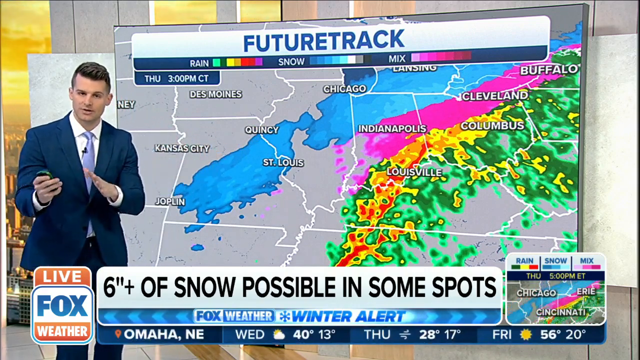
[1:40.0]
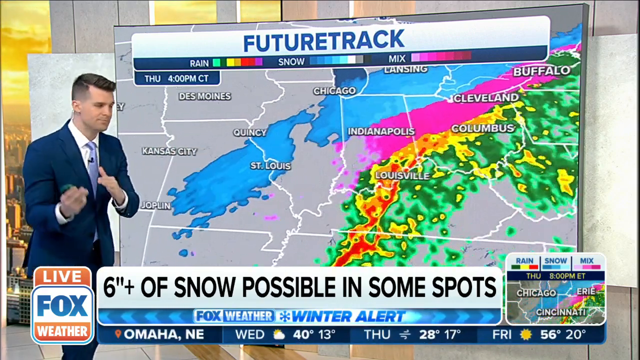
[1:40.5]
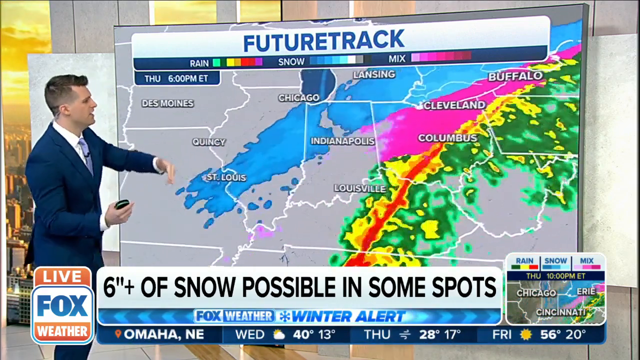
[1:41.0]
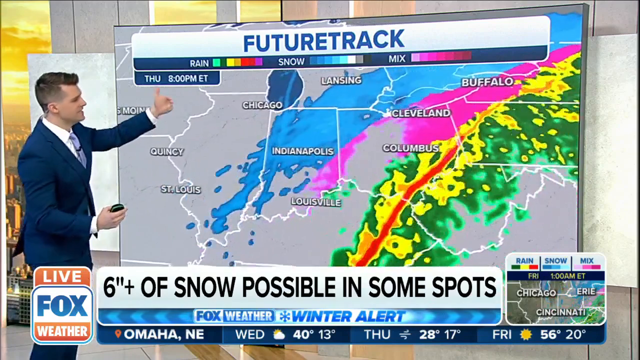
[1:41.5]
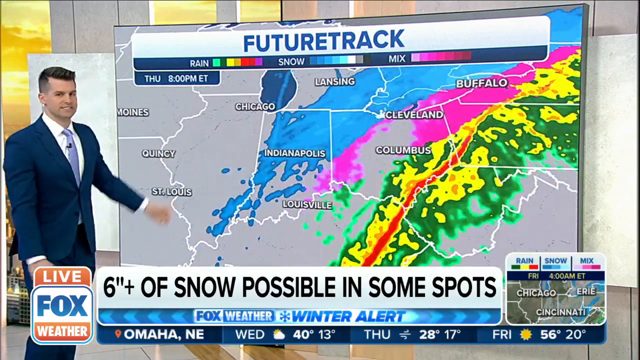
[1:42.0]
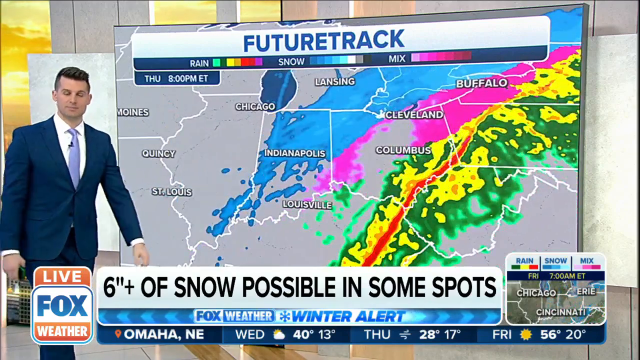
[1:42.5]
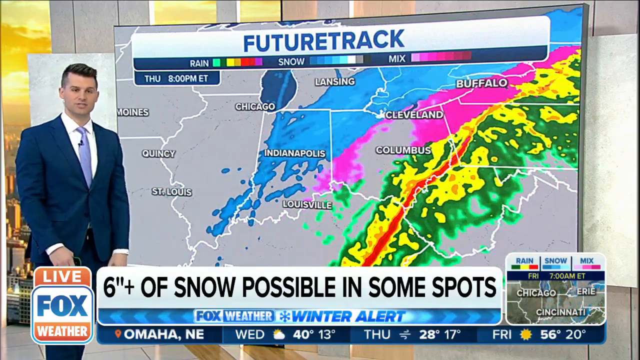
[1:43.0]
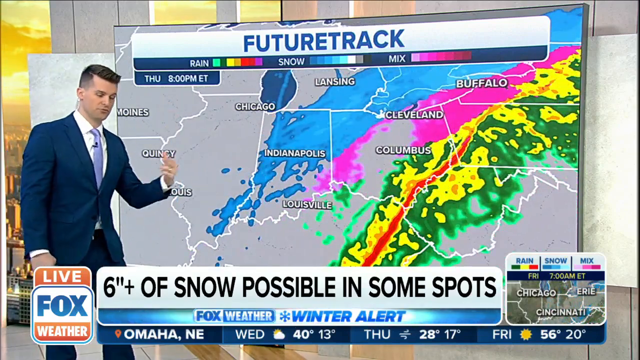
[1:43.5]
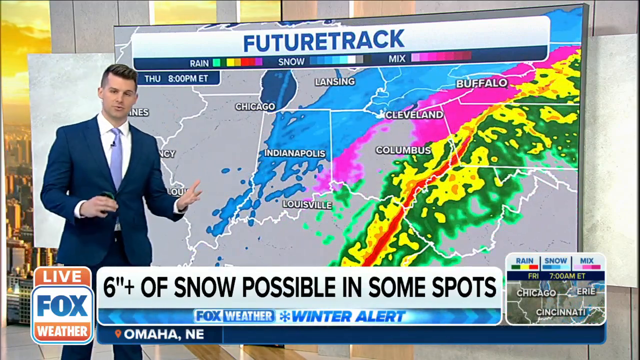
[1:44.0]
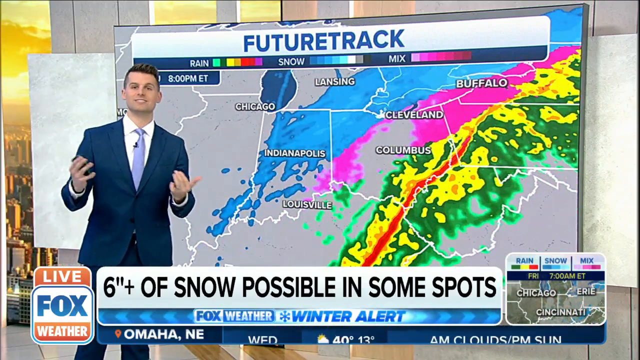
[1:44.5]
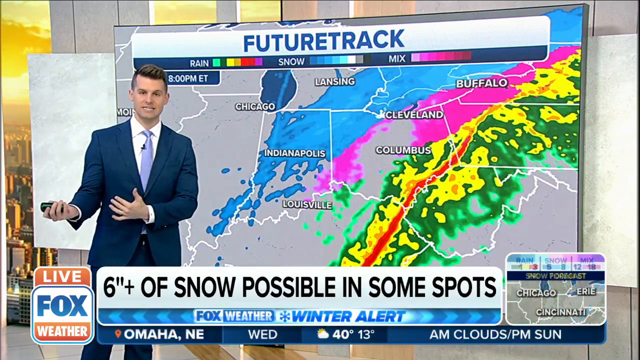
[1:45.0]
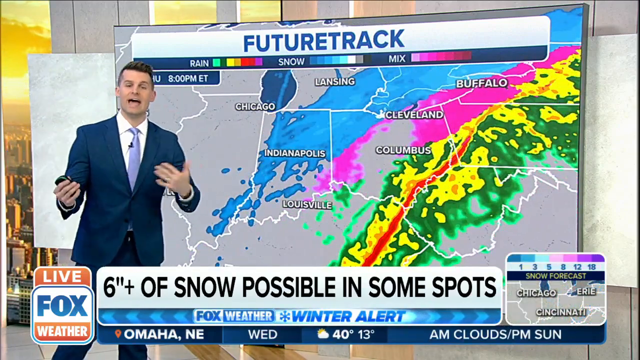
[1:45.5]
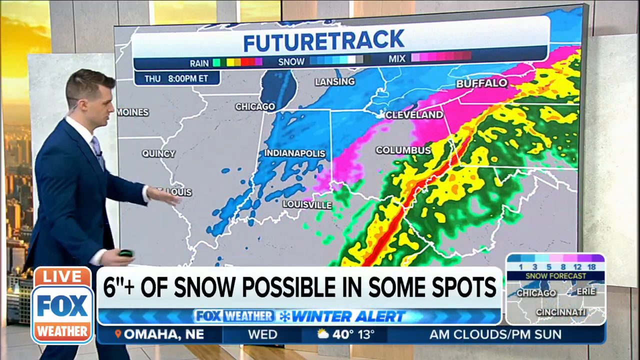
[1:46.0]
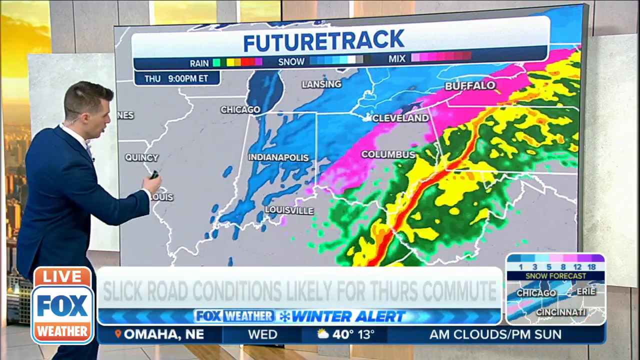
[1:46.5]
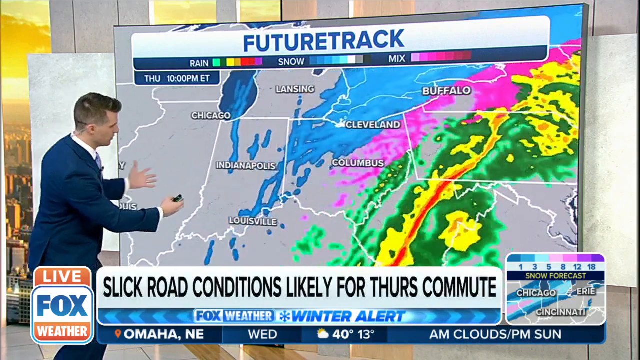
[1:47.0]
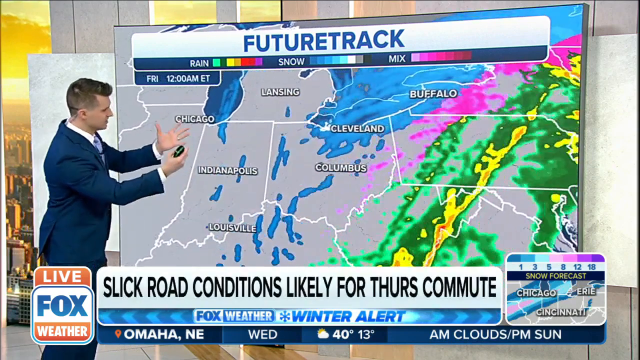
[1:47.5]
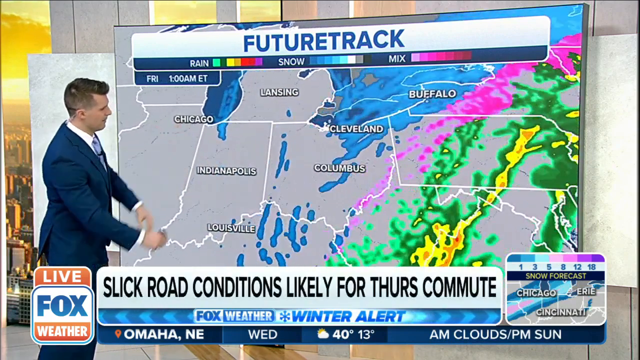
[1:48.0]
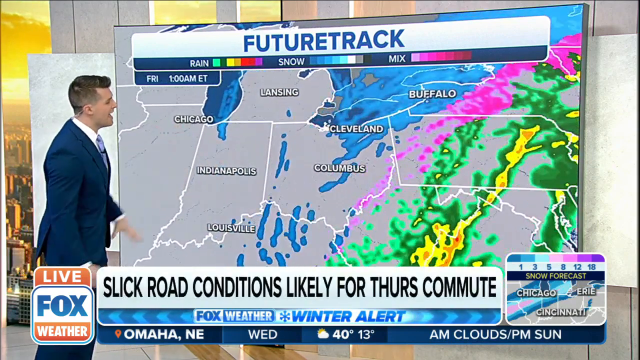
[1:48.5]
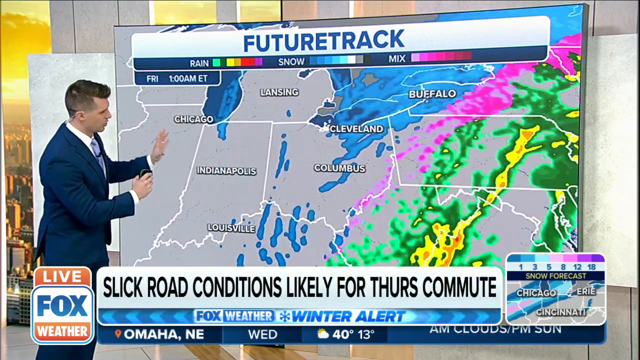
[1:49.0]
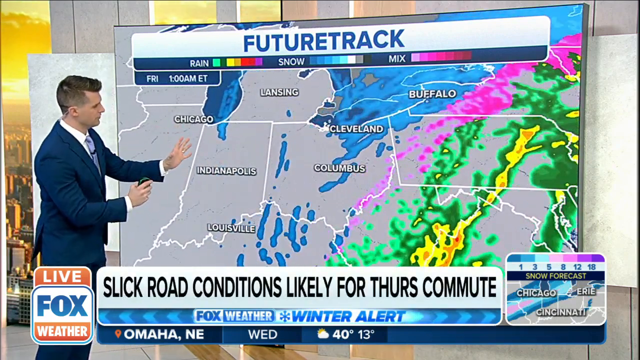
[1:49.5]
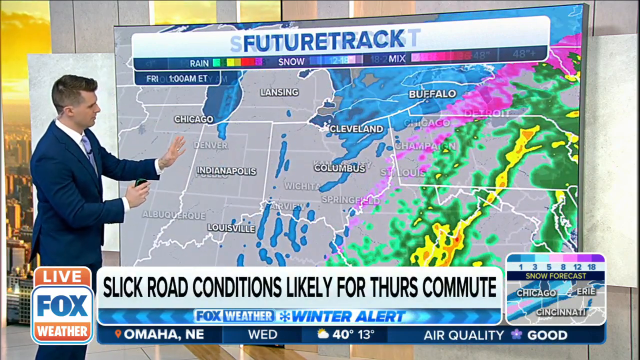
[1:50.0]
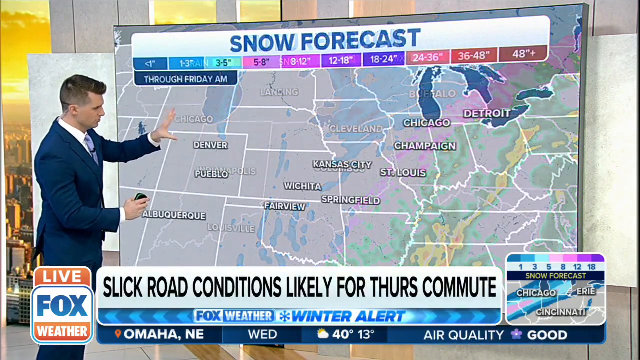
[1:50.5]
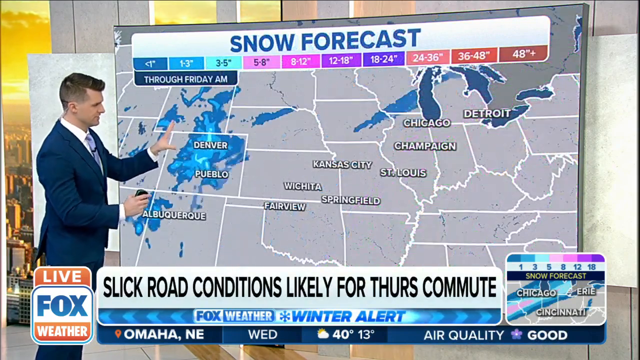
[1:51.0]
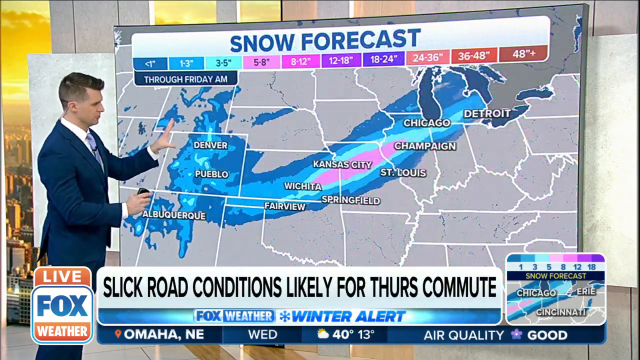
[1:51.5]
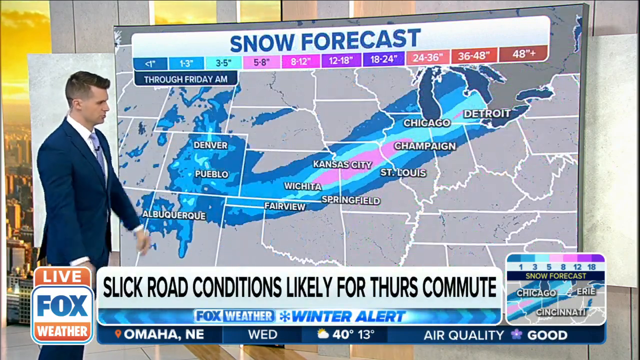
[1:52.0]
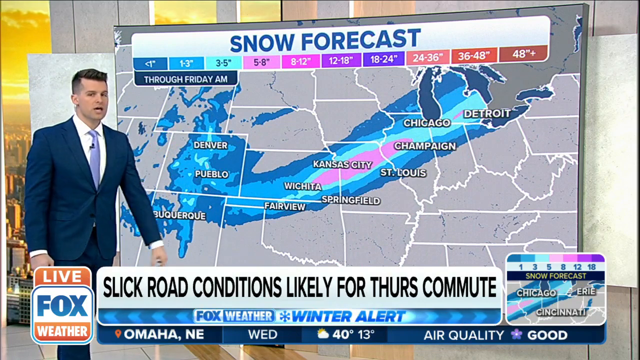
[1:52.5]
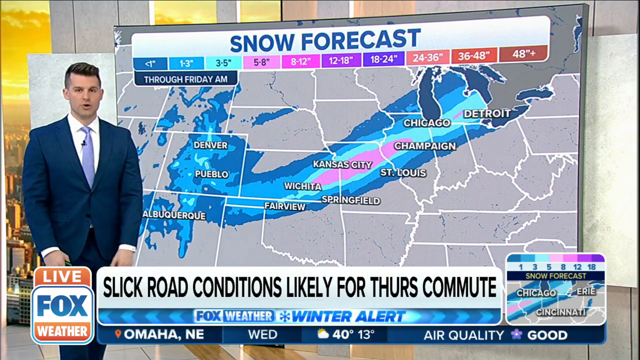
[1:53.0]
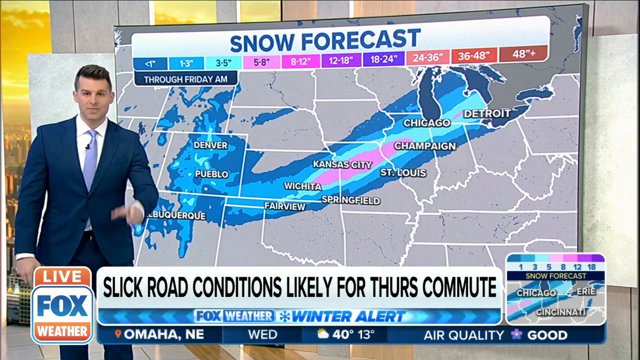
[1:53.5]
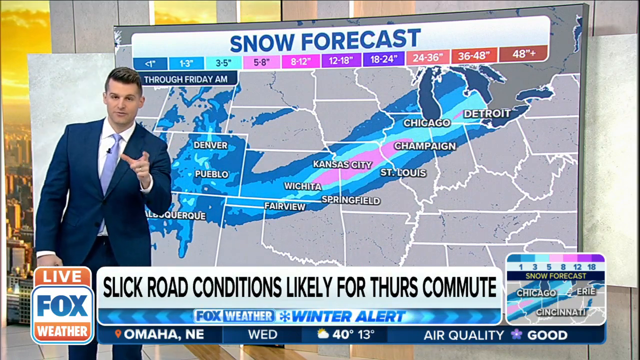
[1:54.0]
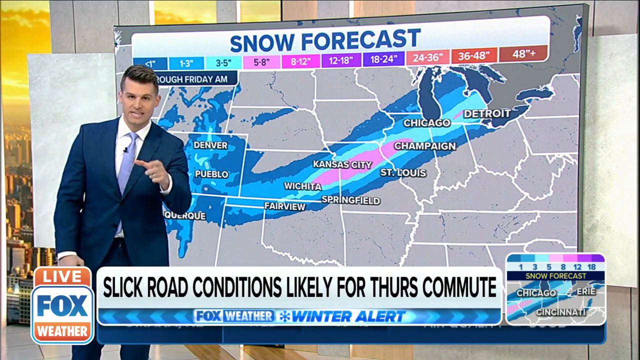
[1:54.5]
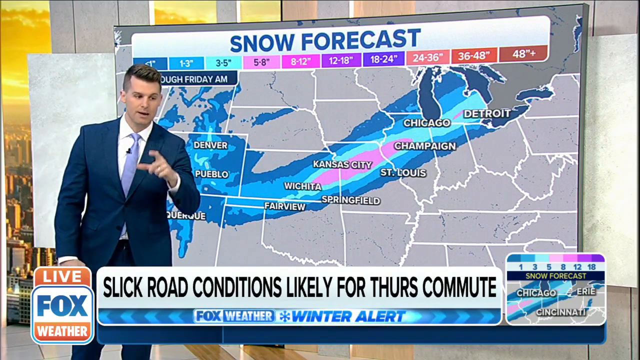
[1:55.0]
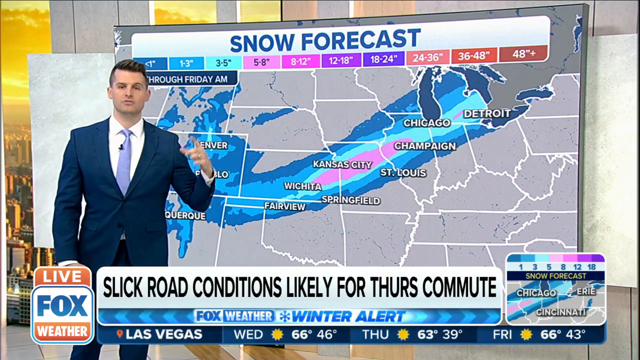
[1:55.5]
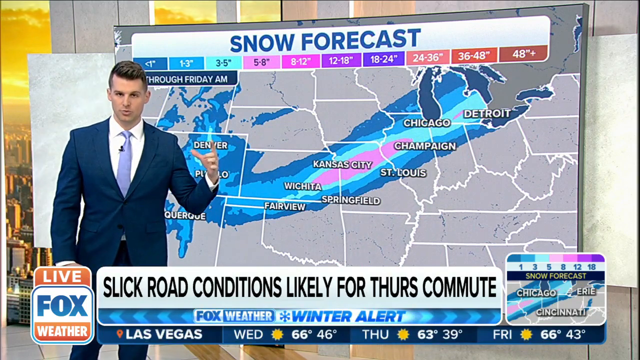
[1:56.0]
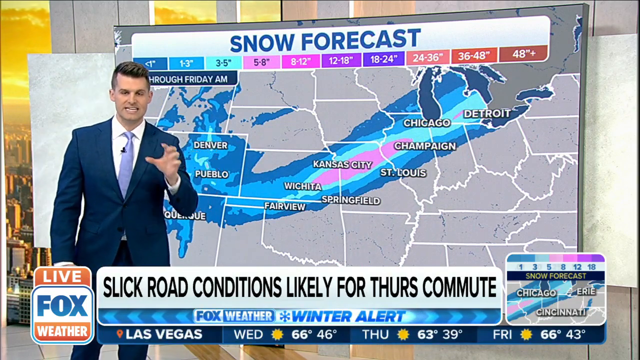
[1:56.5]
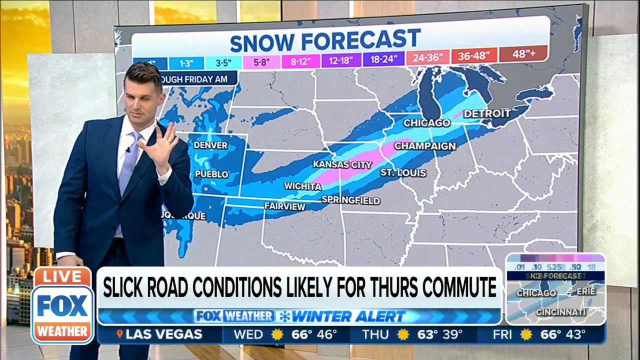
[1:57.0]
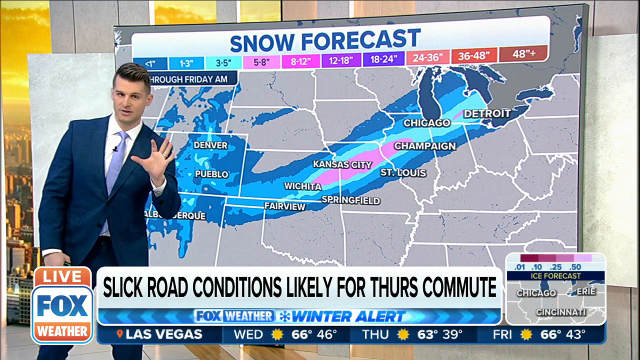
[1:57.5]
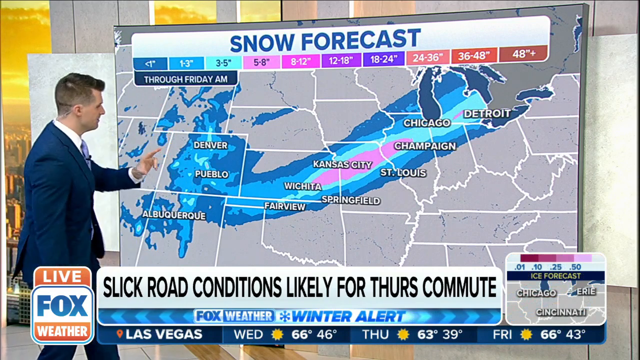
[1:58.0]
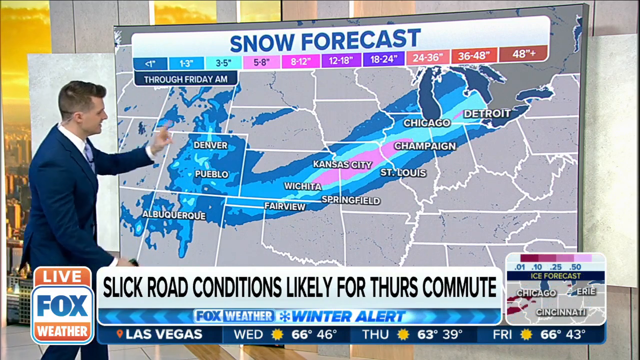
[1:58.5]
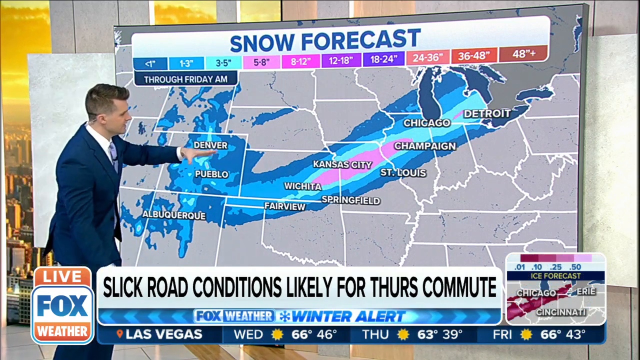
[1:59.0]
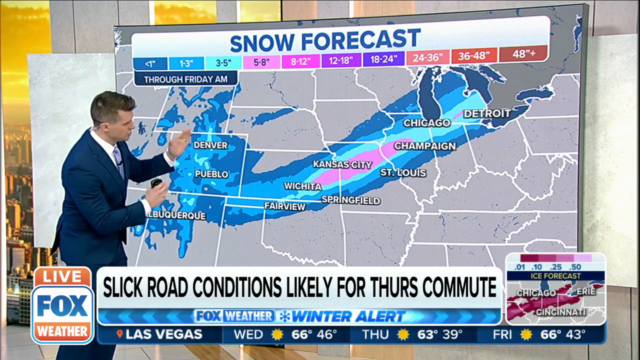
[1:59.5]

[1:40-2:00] The meteorologist stands in front of the board, shaking his hands back and forth and moving the storm slightly eastward with his hands to show its path. A new storm appears to develop over Colorado, extending from Denver and Pueblo eastward through Kansas, Wichita, Kansas City, Missouri, Indiana, Ohio, and Detroit, Michigan. A snow forecast labeled through Friday a.m. shows dark blue, light blue, and pink areas, ranging from less than an inch up to five to eight inches of snow. The five-to-eight-inch area runs from Wichita, Kansas, through Kansas City, Missouri, up to apparently Champaign in Indiana. The surrounding lighter and dark blue areas range from a trace under one inch up to one to three inches. The snow covers about six or seven states, from Colorado to Michigan. The caption at the bottom reads "slick road conditions likely for Thursday's commute." The meteorologist continues gesturing with his hands.